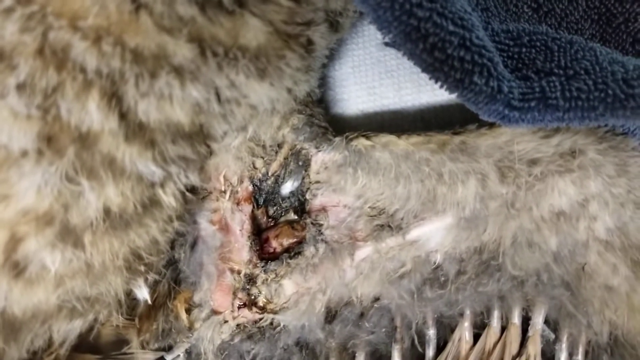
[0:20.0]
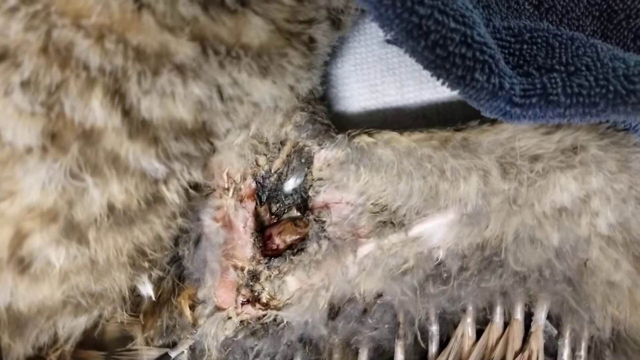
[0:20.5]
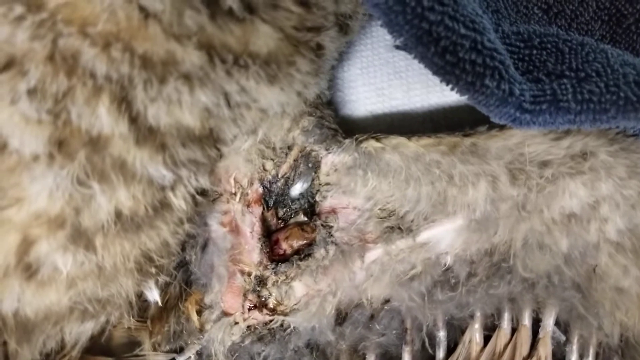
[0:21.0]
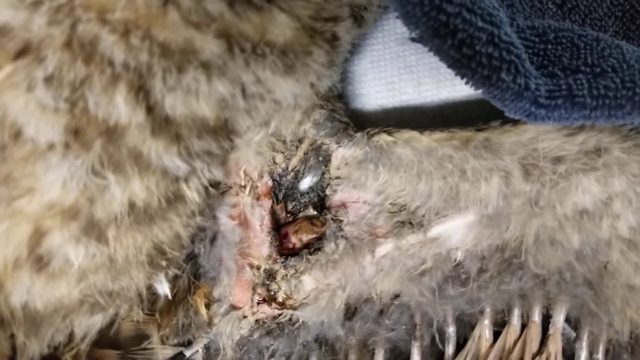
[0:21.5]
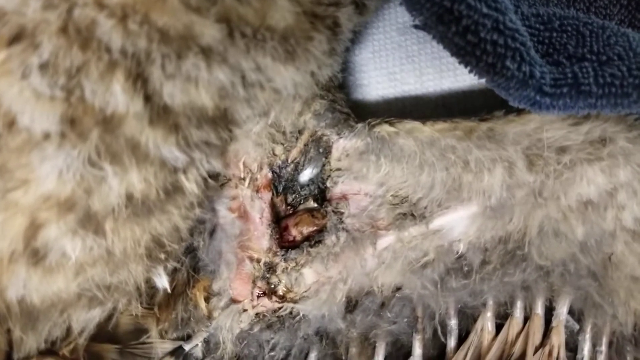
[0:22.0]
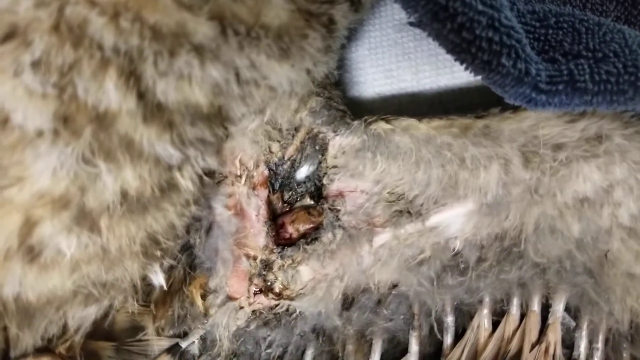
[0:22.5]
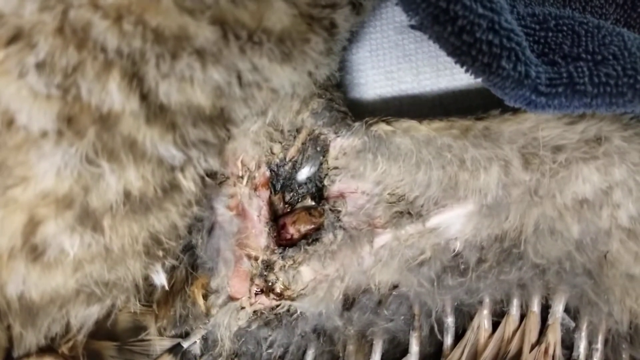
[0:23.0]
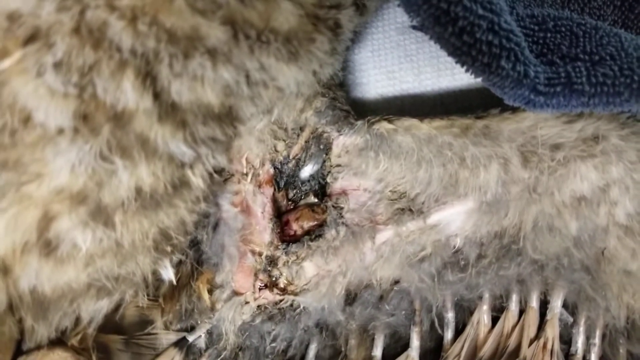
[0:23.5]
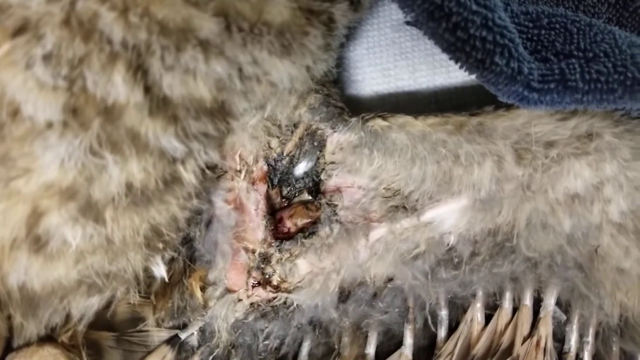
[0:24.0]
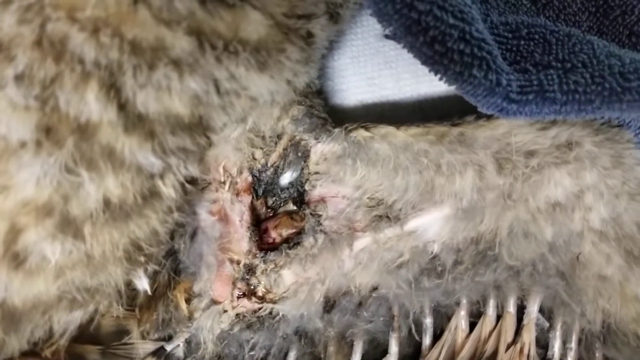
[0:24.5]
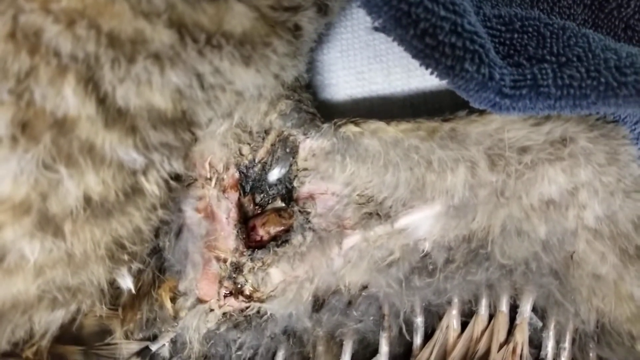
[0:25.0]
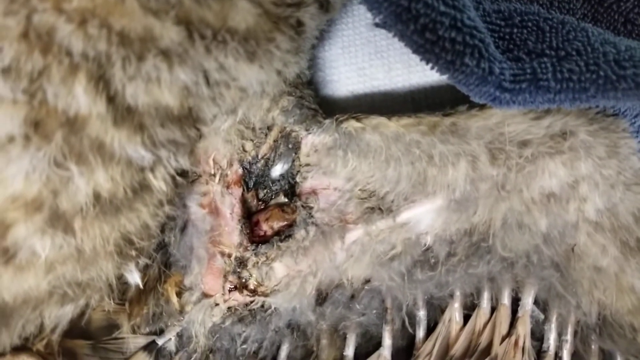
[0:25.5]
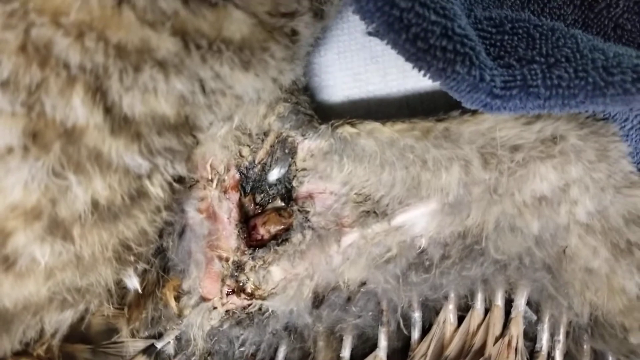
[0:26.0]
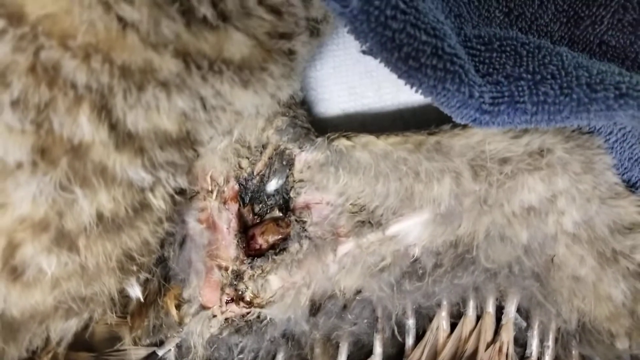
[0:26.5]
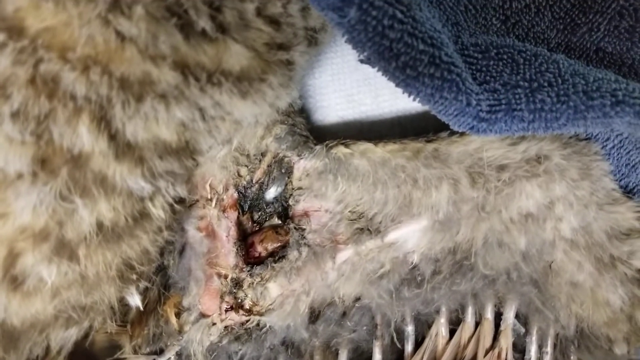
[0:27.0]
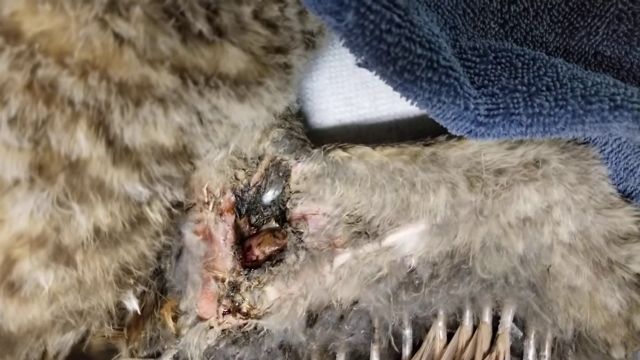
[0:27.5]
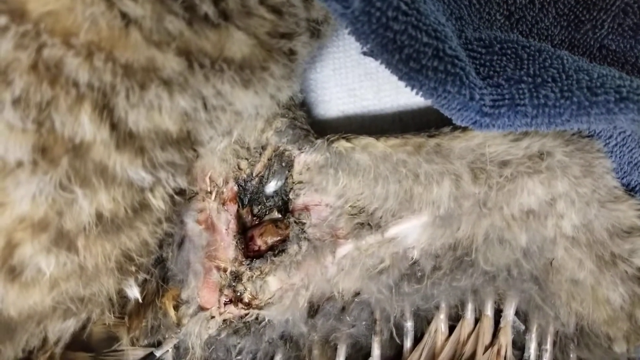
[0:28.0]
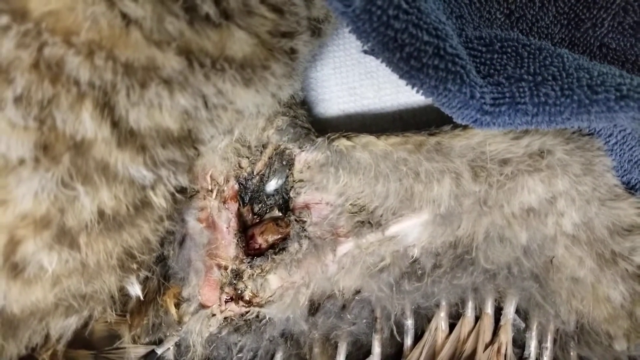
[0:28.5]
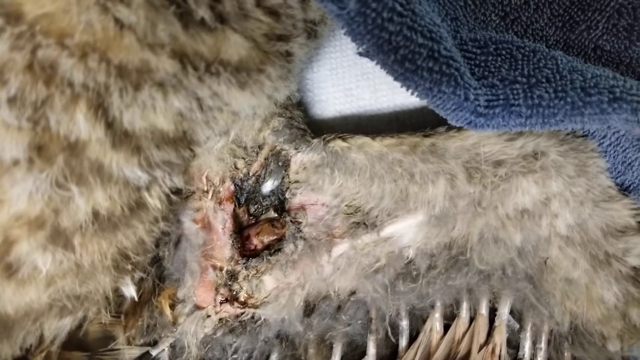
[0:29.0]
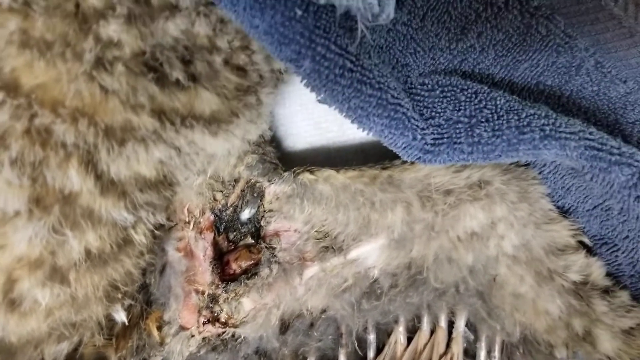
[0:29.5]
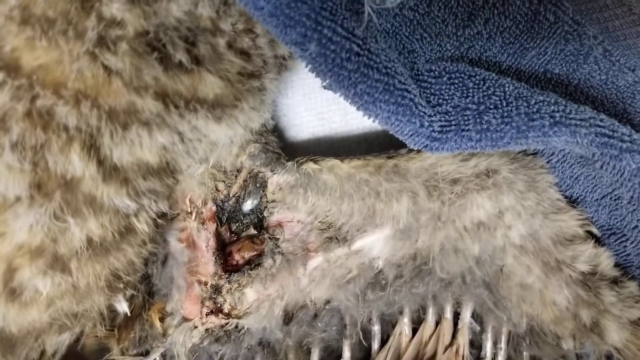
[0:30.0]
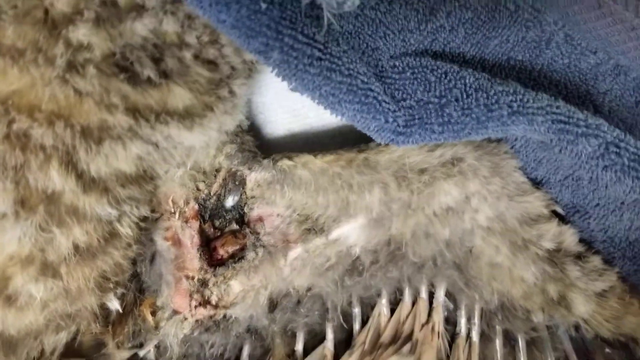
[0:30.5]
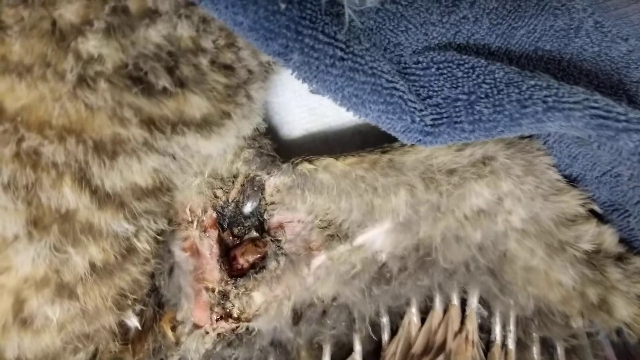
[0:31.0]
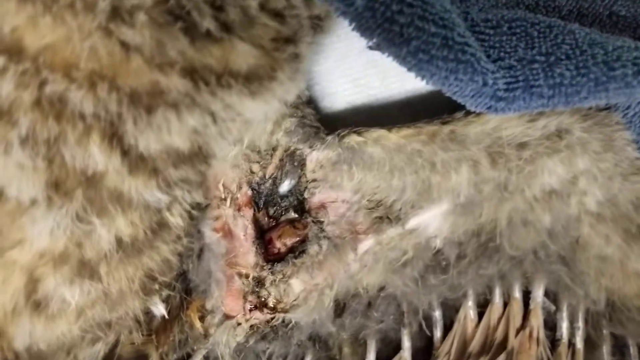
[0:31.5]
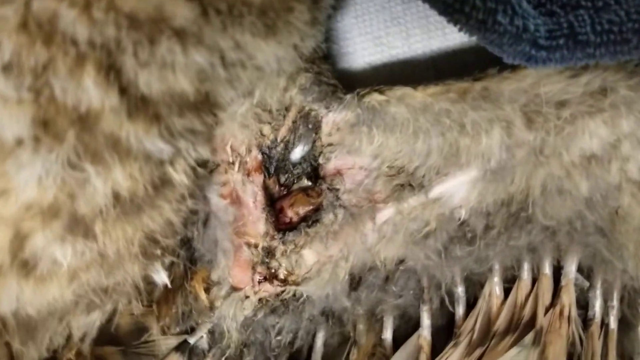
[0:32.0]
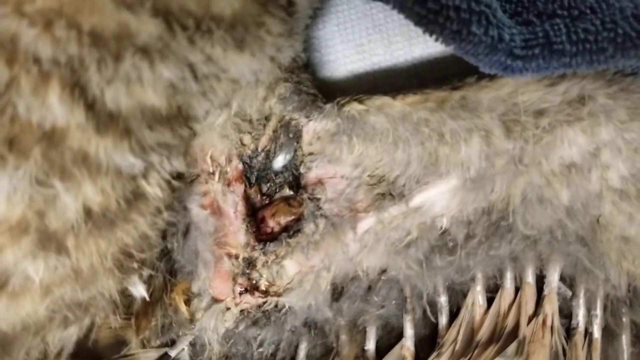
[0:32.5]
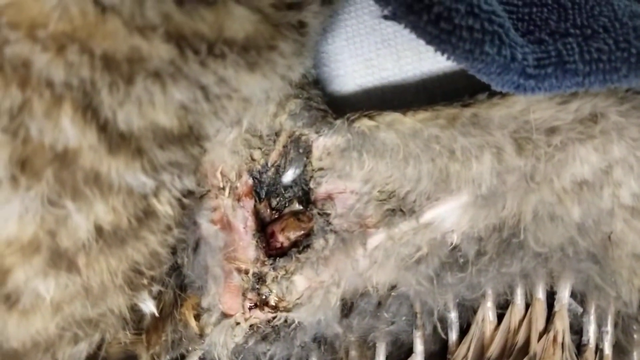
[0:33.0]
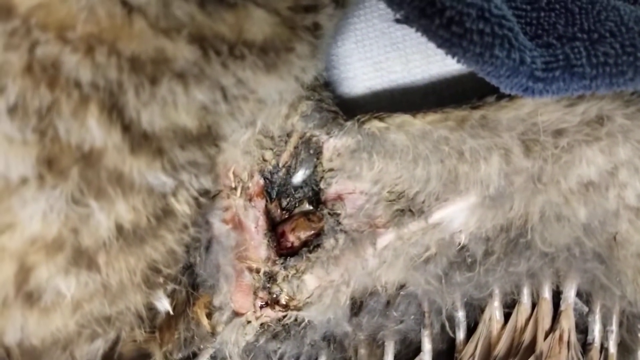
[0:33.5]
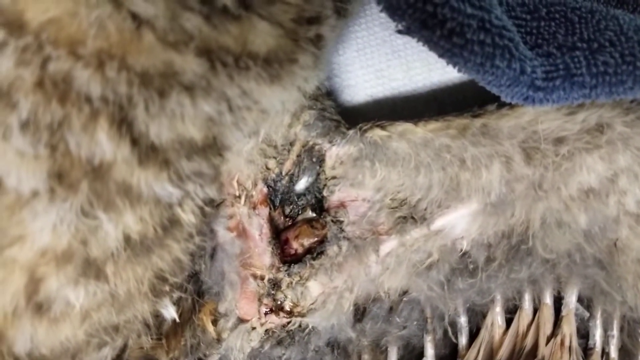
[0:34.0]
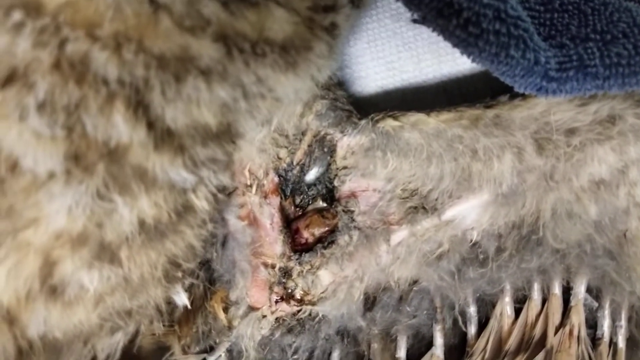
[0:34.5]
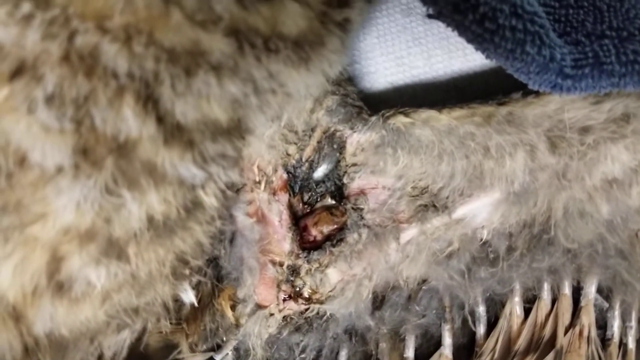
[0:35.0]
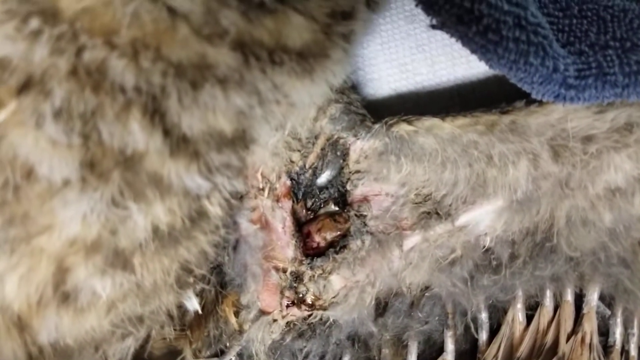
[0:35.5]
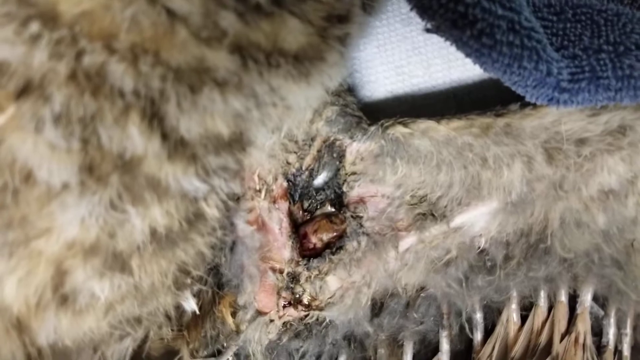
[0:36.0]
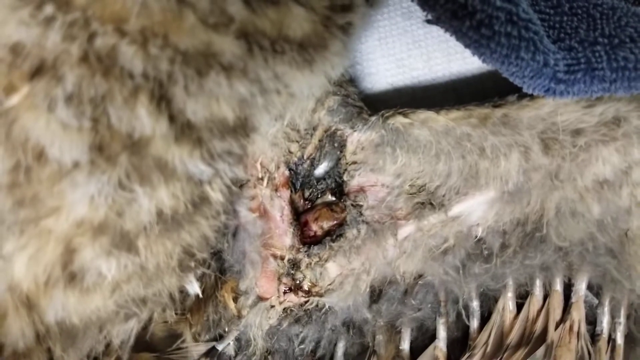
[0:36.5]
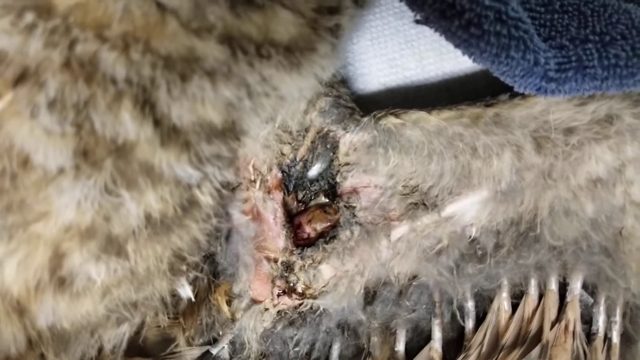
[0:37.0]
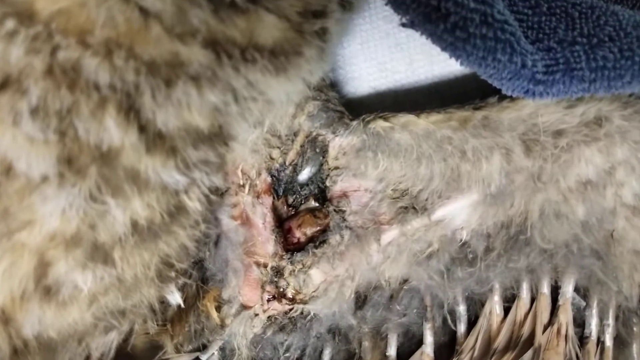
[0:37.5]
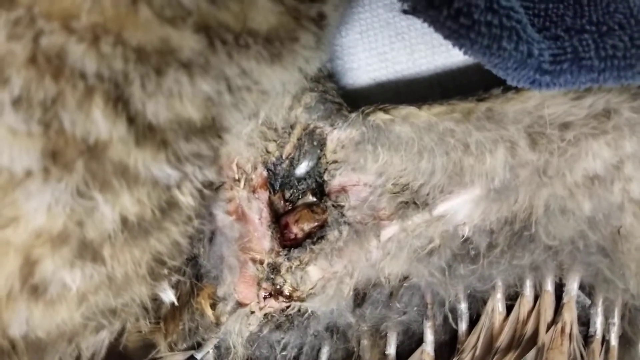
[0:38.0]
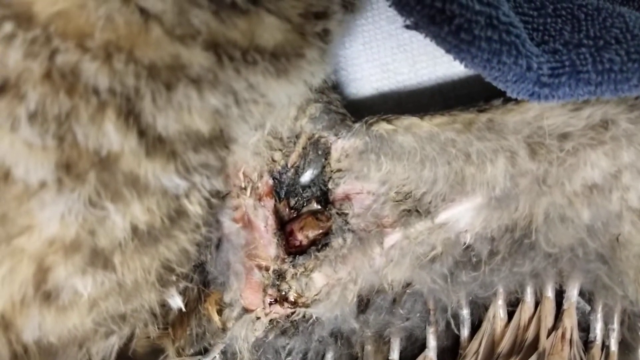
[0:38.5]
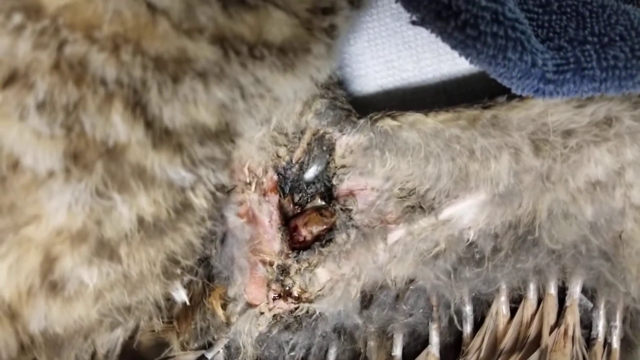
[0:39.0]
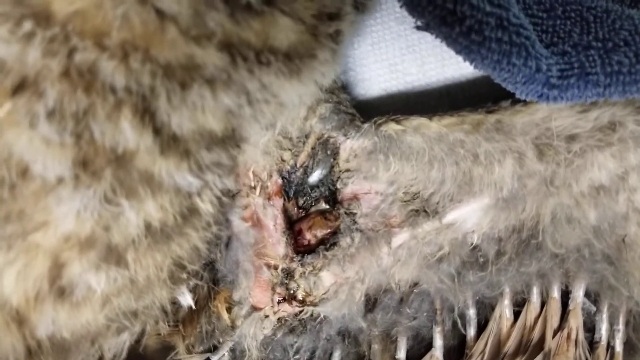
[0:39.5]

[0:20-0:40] The camera stays close up on the wounded area of the bird, moving around a bit jittery, perhaps as if held in one hand. Nothing else is shown. The section to the right of the wound has an almost right-angle shape with feathers underneath it, so it apparently is a wing, and the wound appears to be at the joint that connects the wing to the main body of the bird. The wing is kind of laid flattened out. The wound appears to be a kind of hole in this joint, since what seems to be the white fabric or white surface the bird is laid on top of is visible through it.